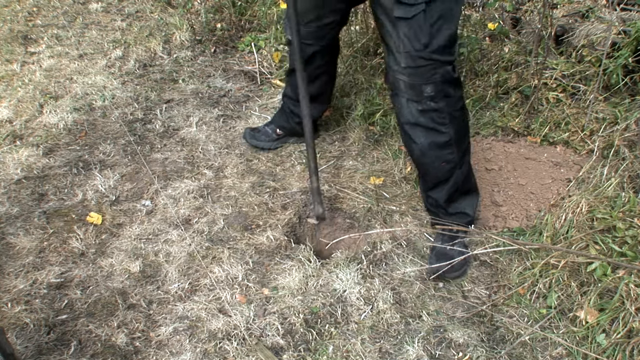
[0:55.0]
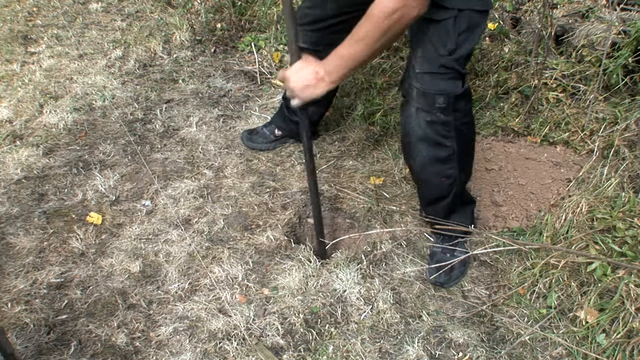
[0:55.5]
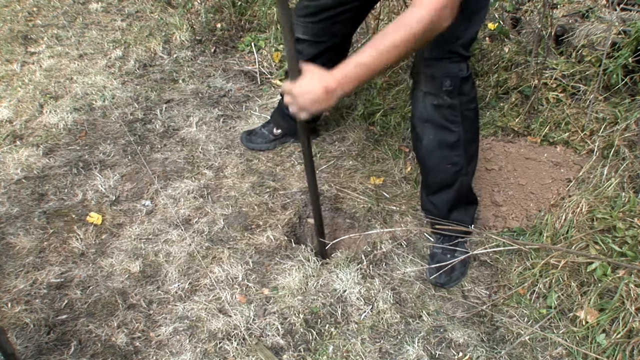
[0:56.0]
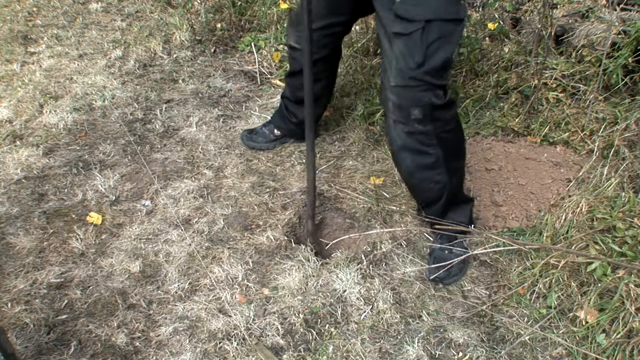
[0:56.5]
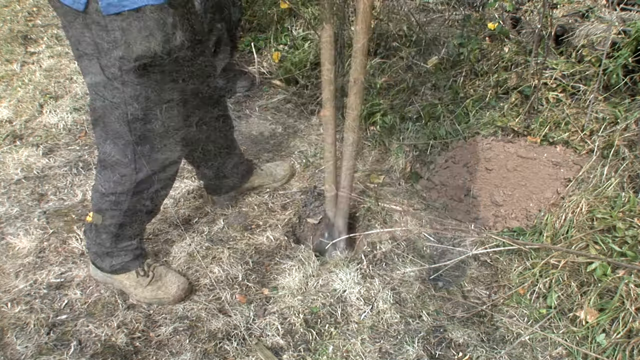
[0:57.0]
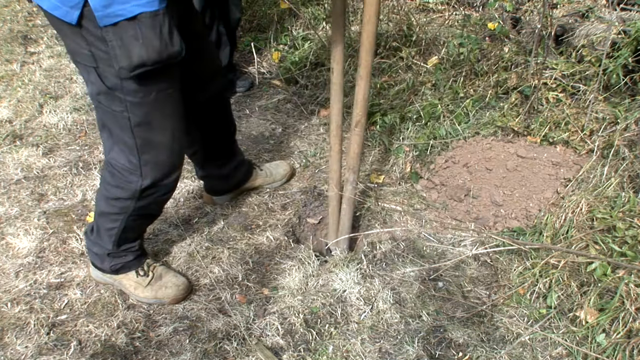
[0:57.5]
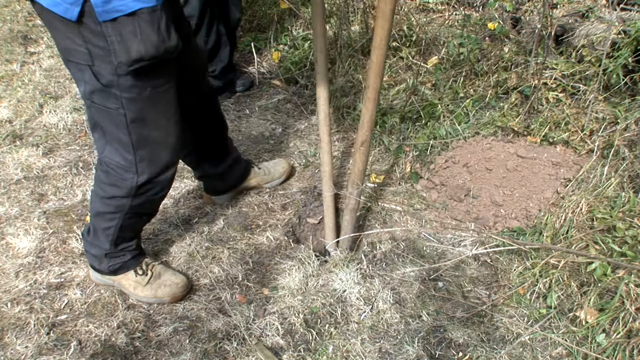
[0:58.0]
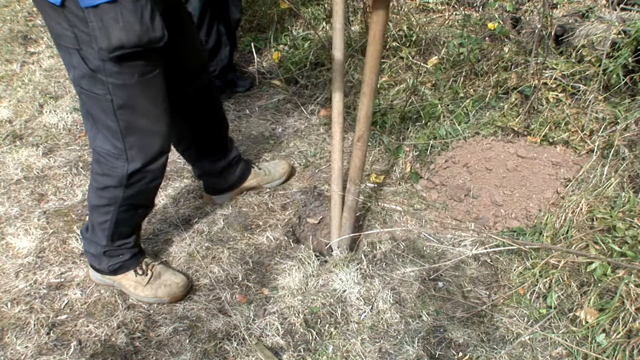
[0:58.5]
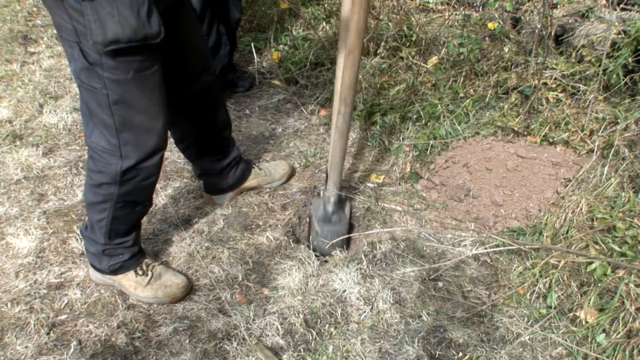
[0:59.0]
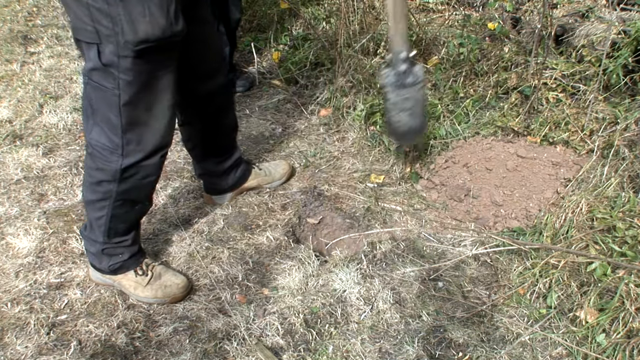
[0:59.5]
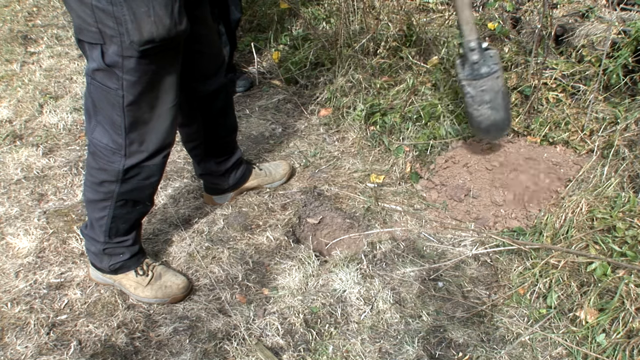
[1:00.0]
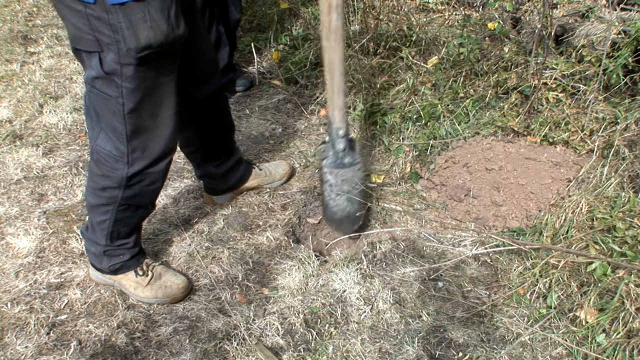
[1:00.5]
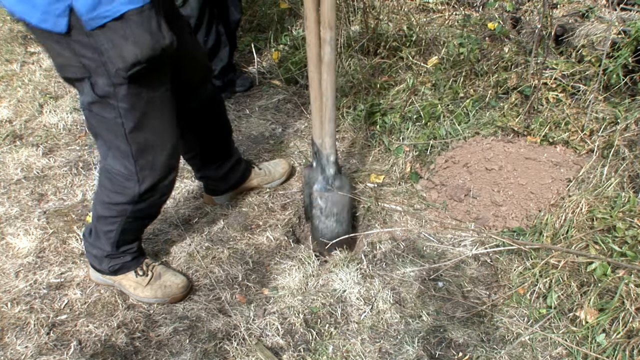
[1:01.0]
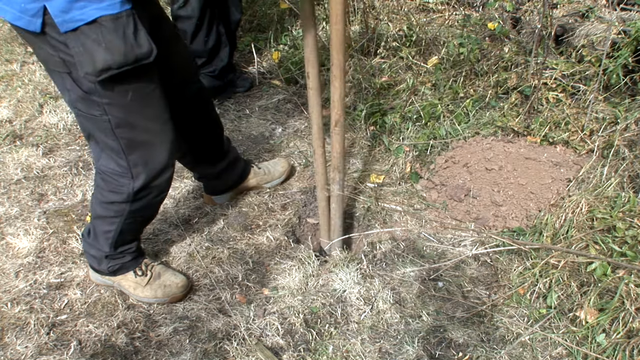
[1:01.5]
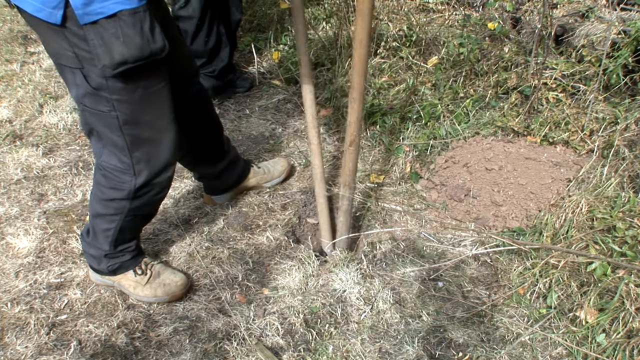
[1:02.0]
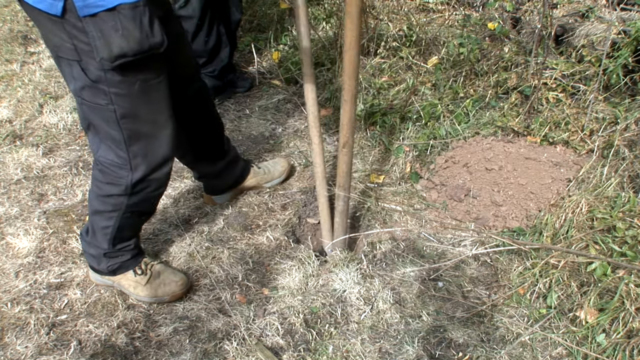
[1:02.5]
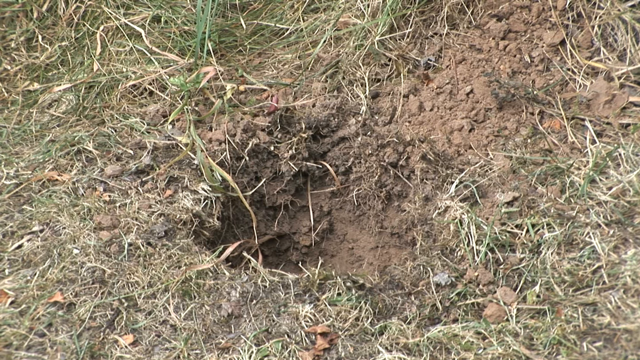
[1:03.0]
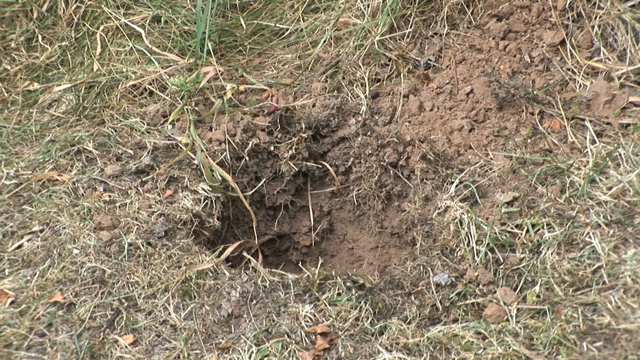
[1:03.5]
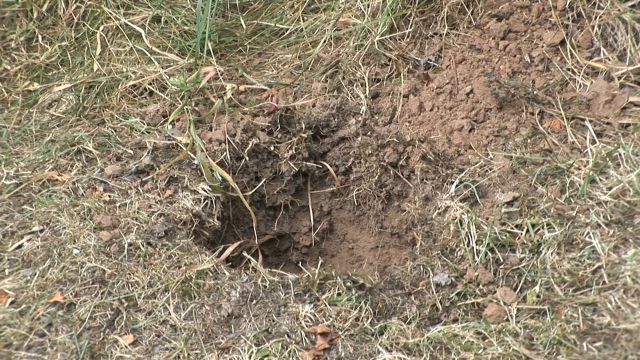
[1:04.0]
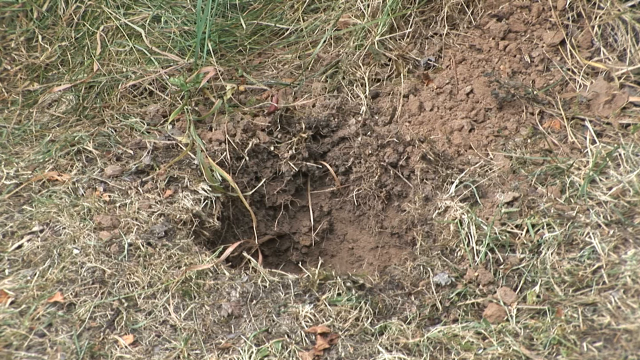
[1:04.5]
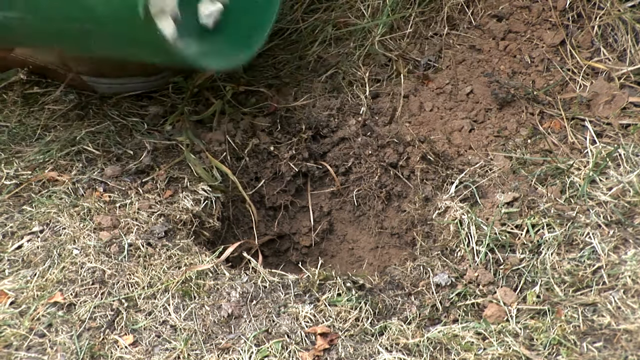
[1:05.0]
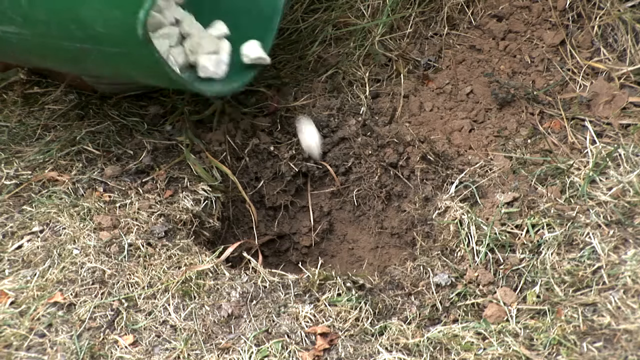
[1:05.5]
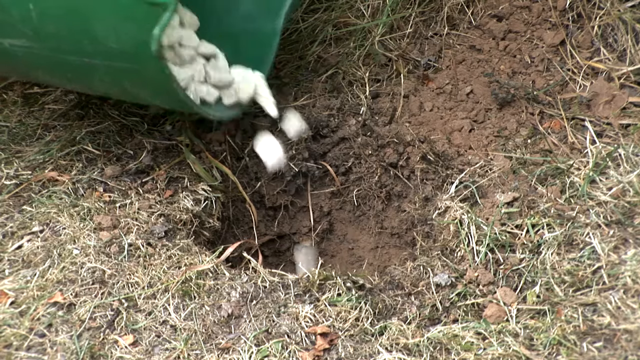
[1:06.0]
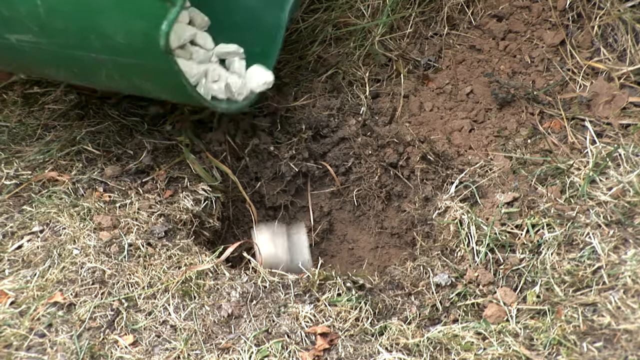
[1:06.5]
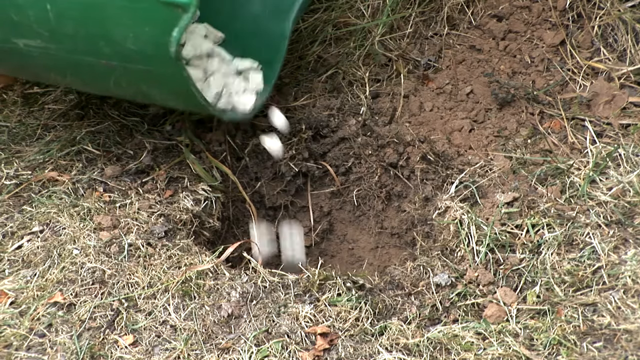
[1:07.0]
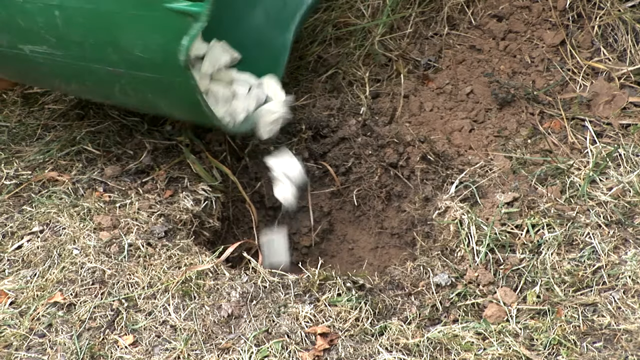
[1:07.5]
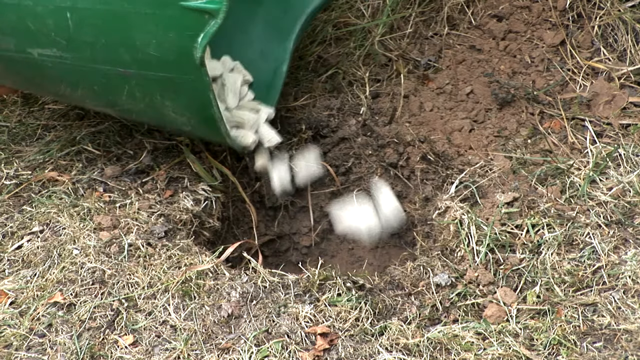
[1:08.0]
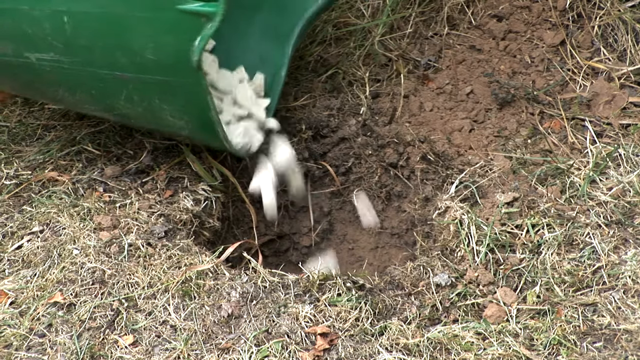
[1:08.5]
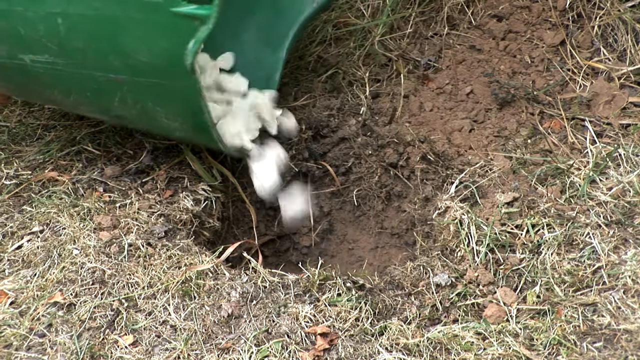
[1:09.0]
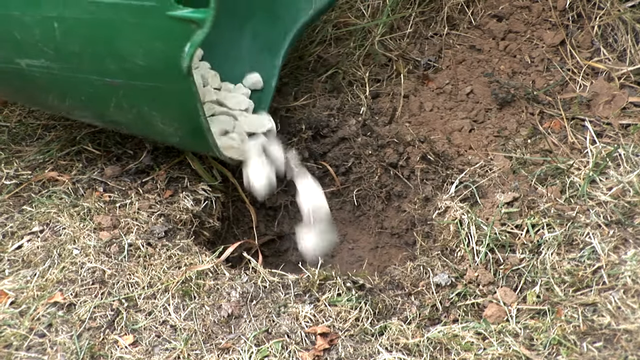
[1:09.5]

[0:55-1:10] A man in black pants and black boots stands over a hole in the ground holding a black pole and jams it down, apparently to clean out the hole. A hole tool that is basically two shovels facing inward is then used to grab dirt and lift it out of the hole. A man in black pants and brown boots is visible, with the bottom part of his blue shirt showing. He takes a green bucket with white rocks in it and dumps the rocks into the freshly dug hole. There is nothing else on the ground but brown grass with a little green mixed in; the grass seems dead and the area very dry.